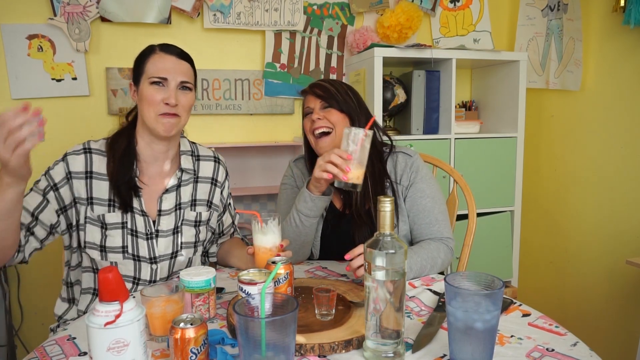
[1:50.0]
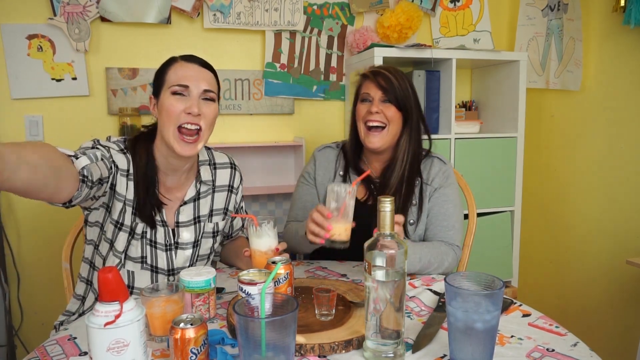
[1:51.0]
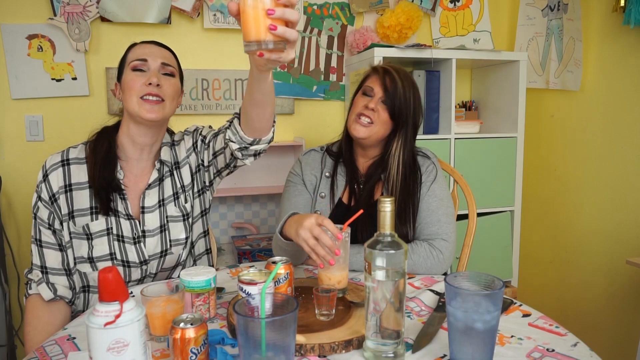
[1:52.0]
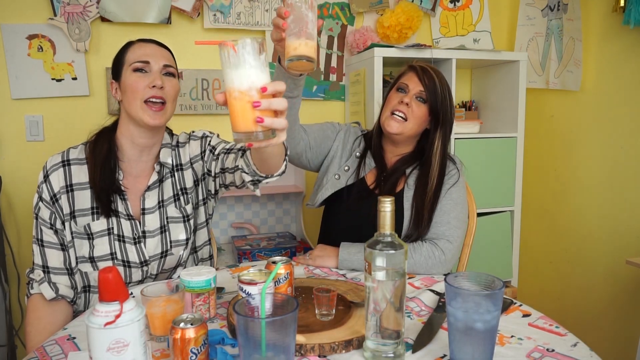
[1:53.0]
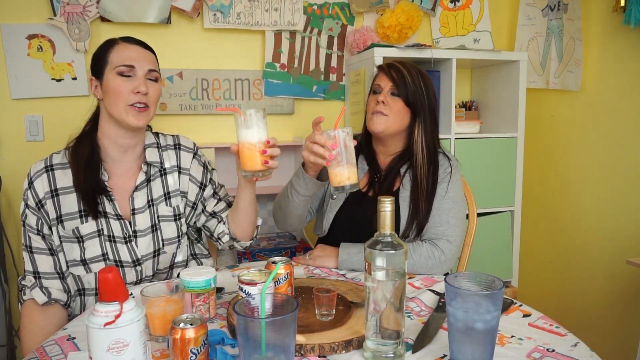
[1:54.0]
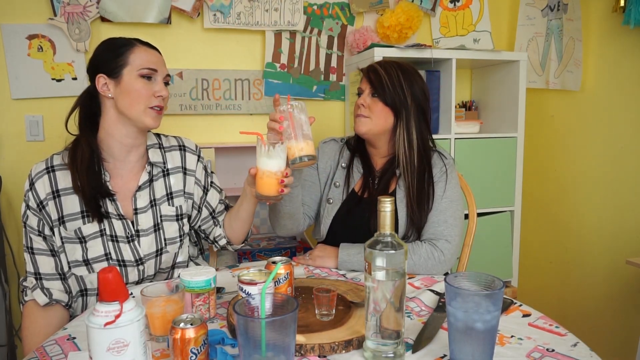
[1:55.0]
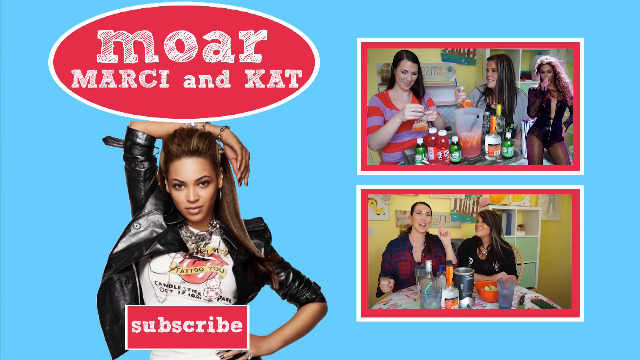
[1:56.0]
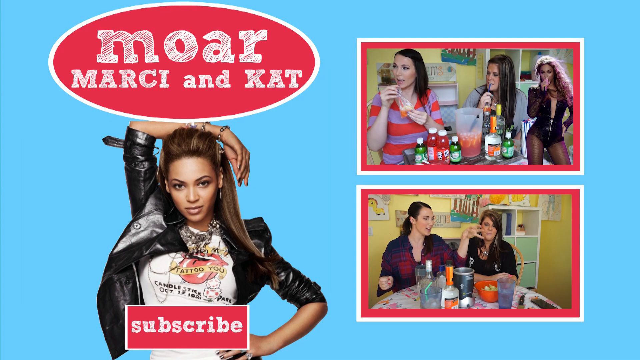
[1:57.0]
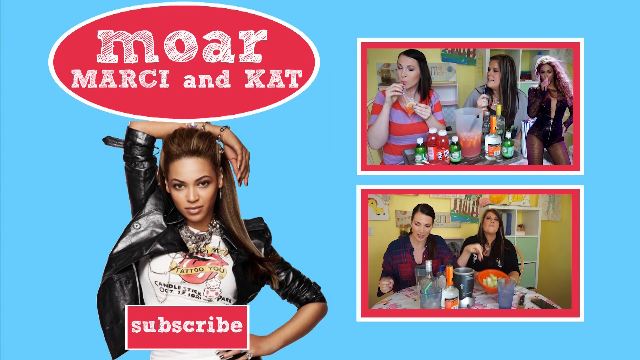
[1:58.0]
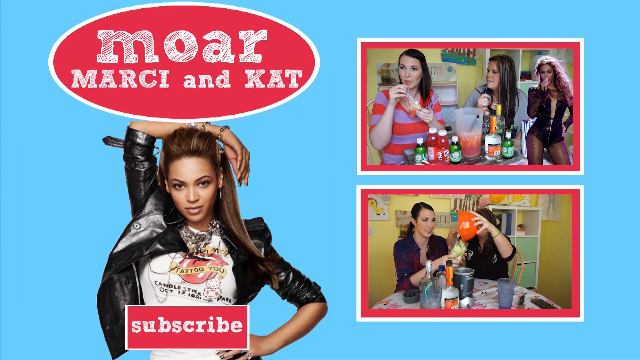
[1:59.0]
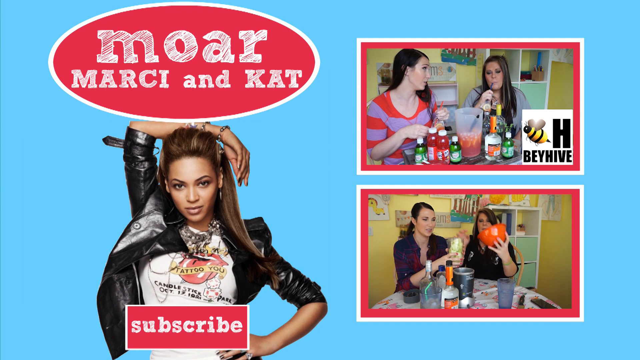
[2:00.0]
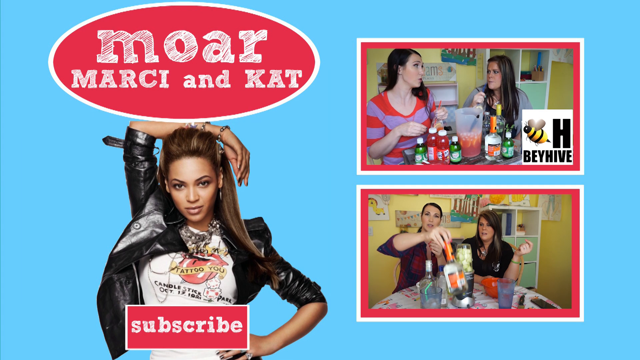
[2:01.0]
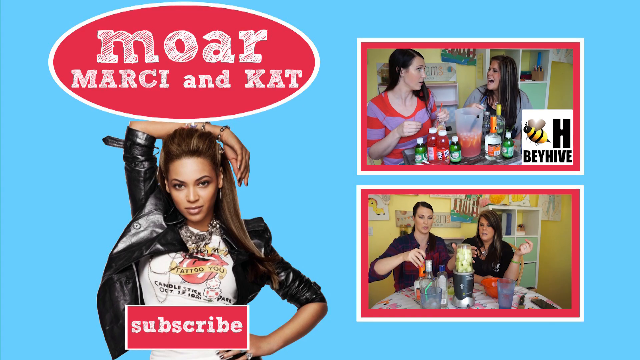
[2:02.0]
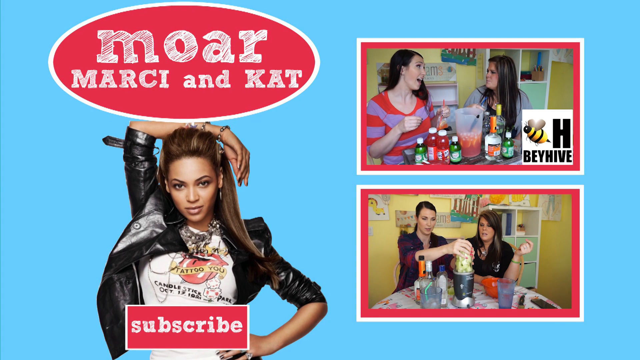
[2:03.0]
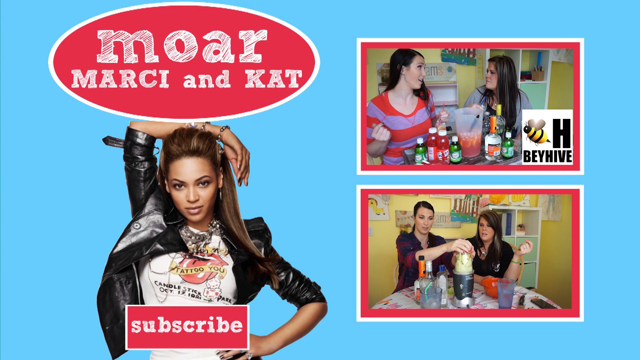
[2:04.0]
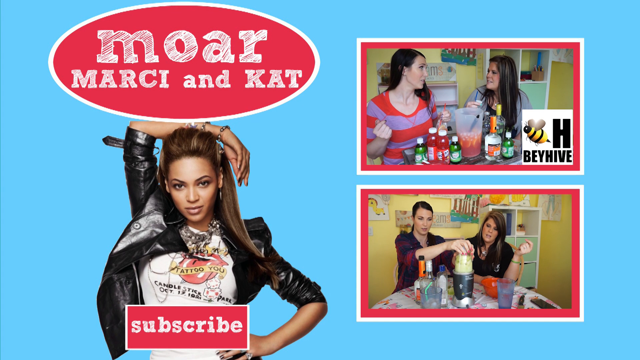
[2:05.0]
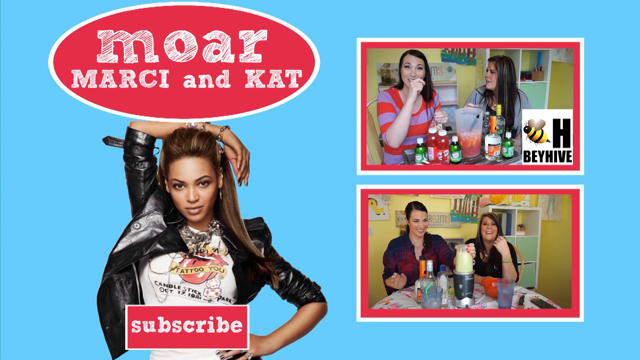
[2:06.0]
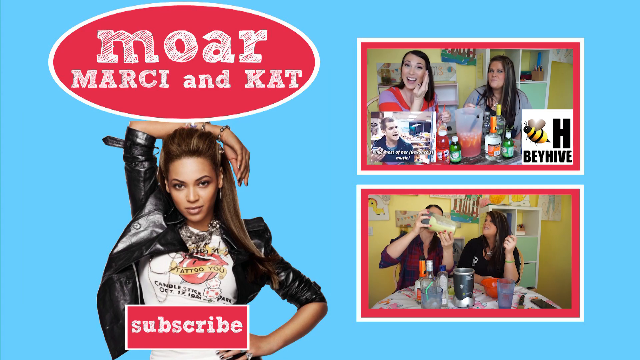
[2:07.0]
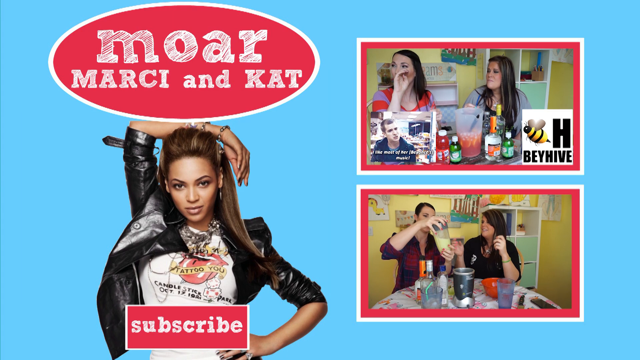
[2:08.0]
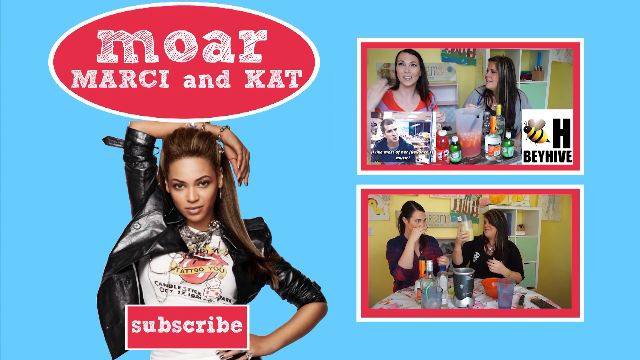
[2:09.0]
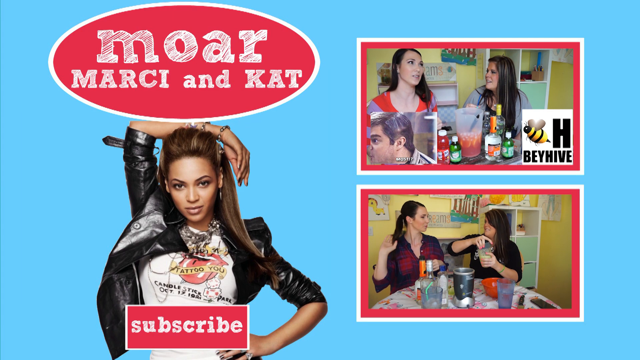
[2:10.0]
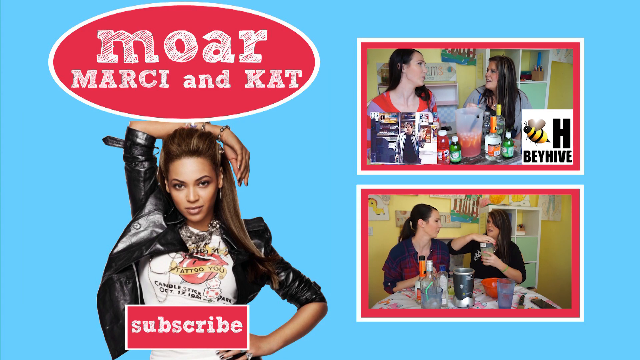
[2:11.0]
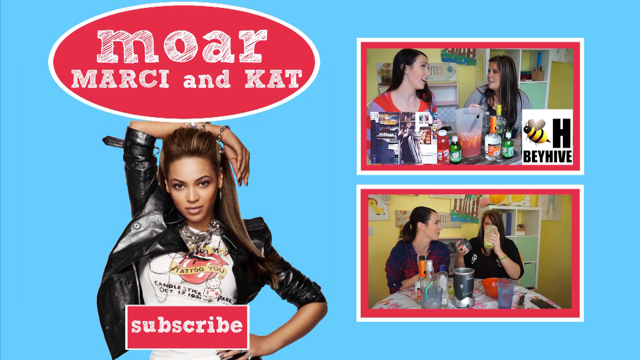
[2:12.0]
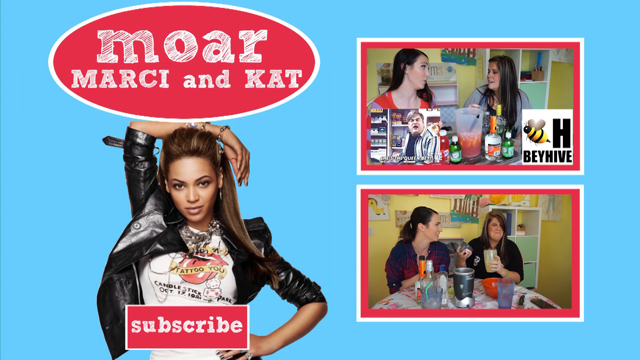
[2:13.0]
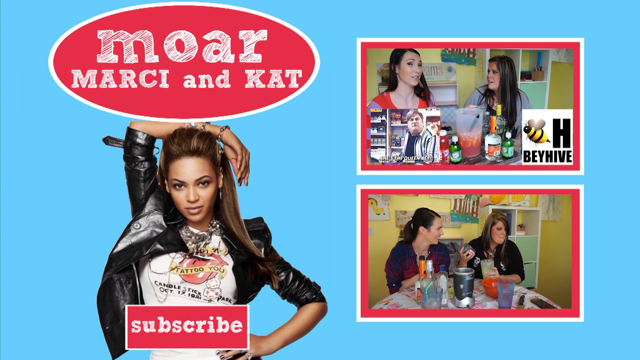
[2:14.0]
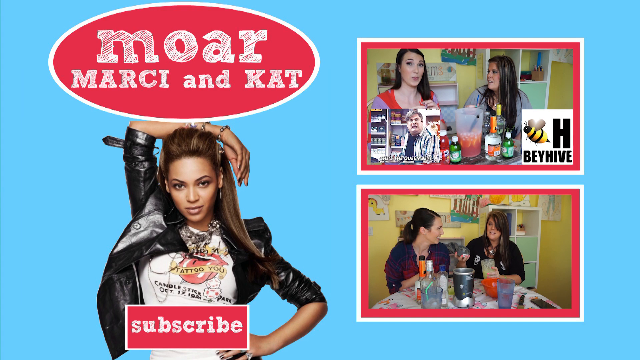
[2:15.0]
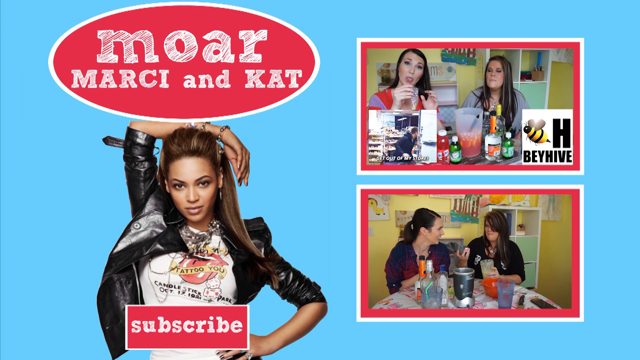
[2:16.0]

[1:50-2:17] Both women are still sitting at the table enjoying their drinks. The glass of the woman on the right side of the screen is almost completely empty, and she laughs while the woman on the left in the checkered shirt makes faces and talks with her hands a lot. The woman on the right is clearly having a good time, and the two clink their glasses together as if making a cheers. Then "Marcy and Kat" appears in white and red on the left side of the screen. A picture of Beyonce wearing a leather jacket against a blue background is shown, with "MOAR" at the top. The right side of the screen shows what looks like additional videos that could be clicked on, in which the two women make more drinks and try new things. At the very bottom of the screen there is a subscribe link in red and white, and the end of the video shows advertisements for other videos to click on.